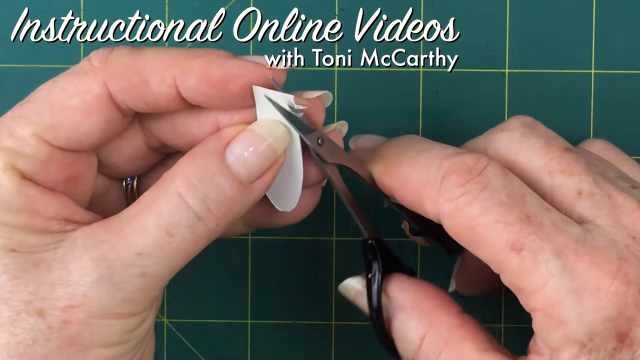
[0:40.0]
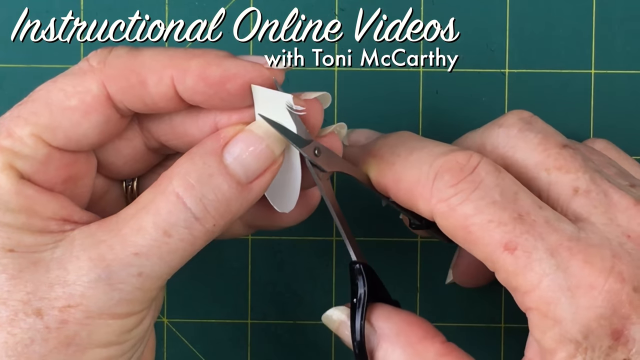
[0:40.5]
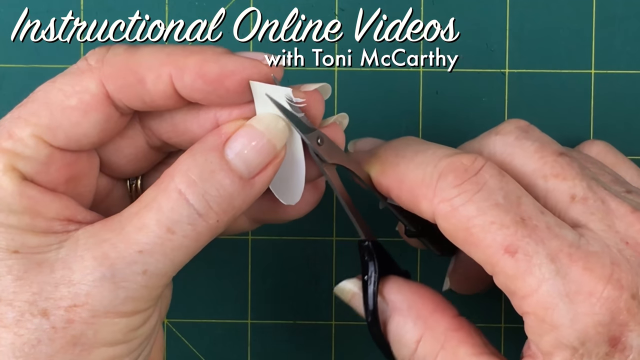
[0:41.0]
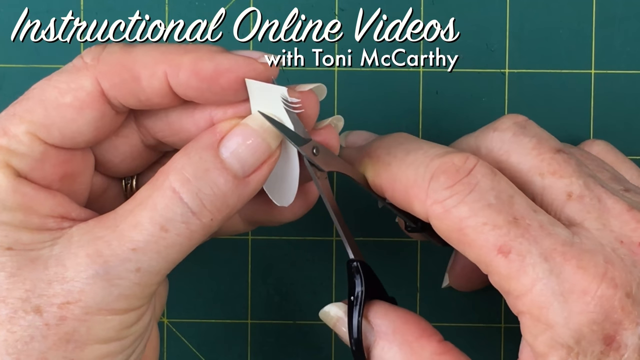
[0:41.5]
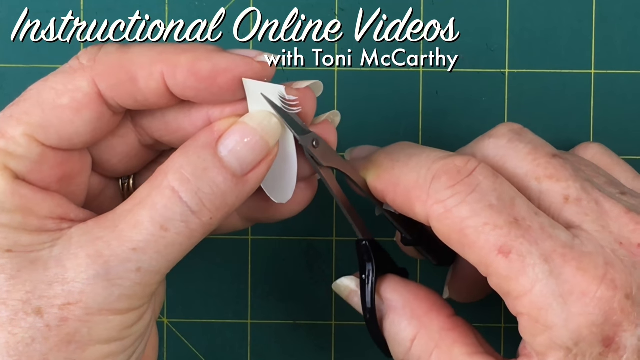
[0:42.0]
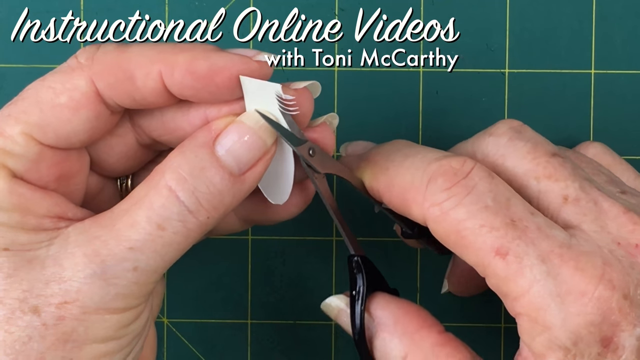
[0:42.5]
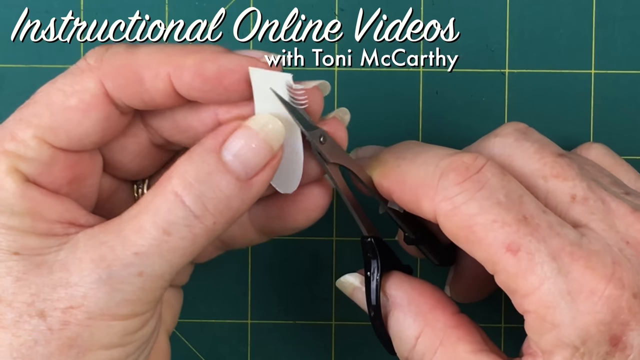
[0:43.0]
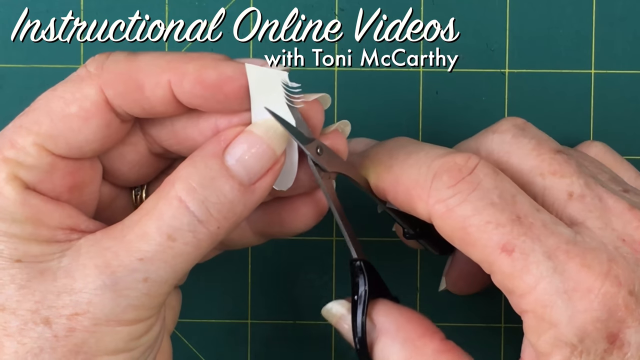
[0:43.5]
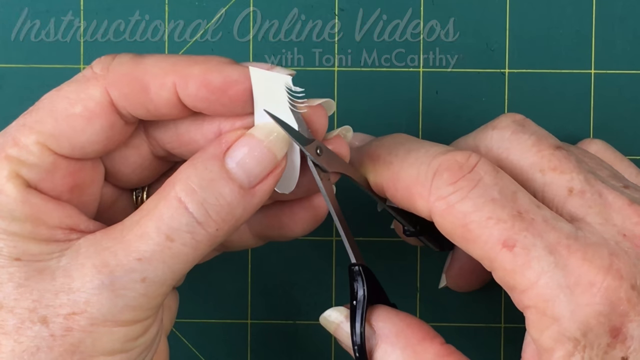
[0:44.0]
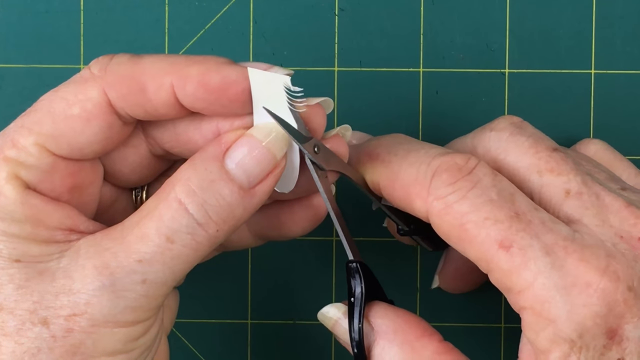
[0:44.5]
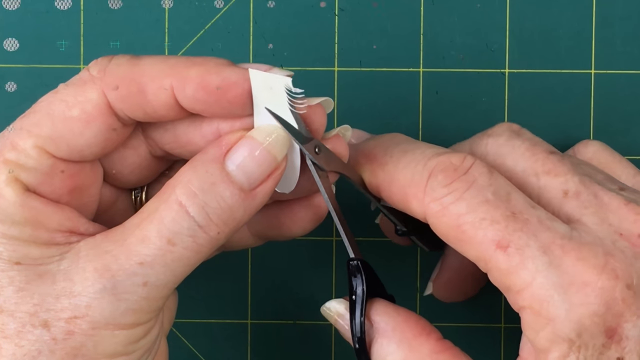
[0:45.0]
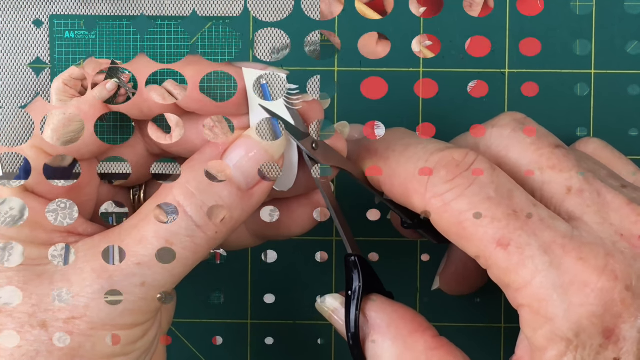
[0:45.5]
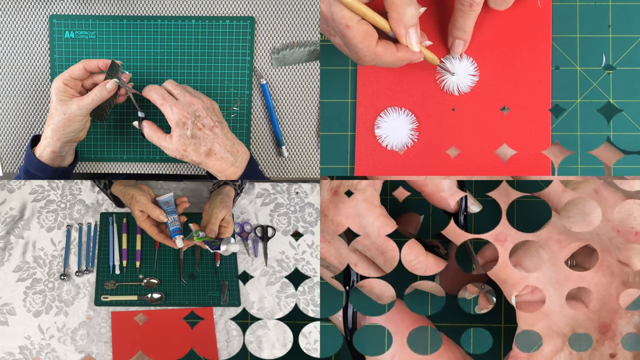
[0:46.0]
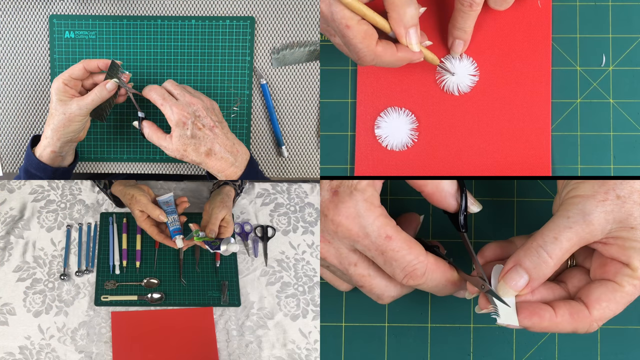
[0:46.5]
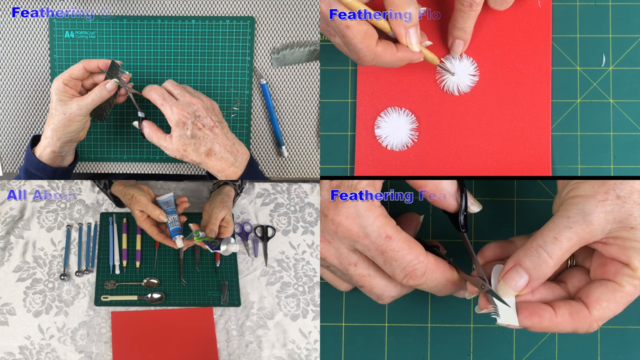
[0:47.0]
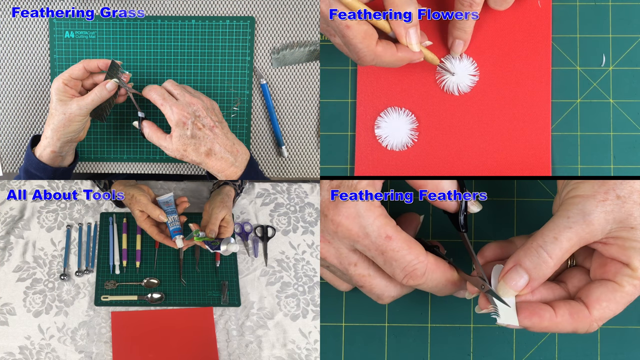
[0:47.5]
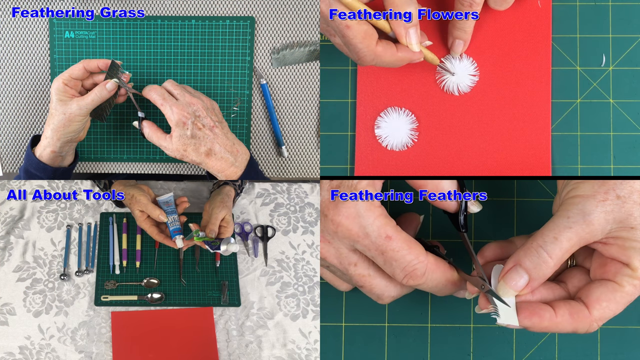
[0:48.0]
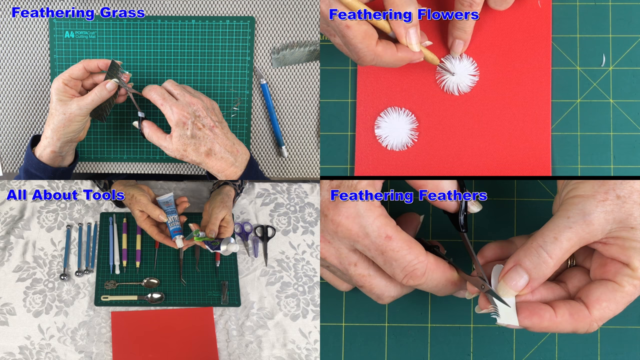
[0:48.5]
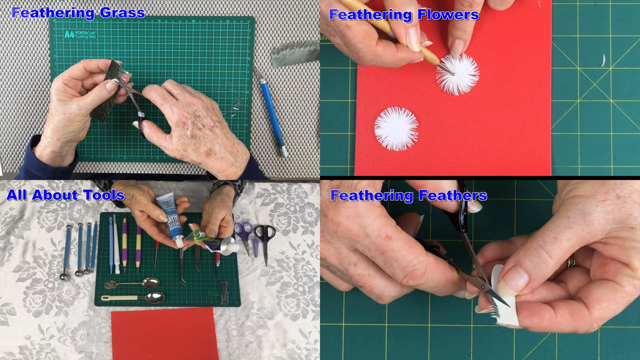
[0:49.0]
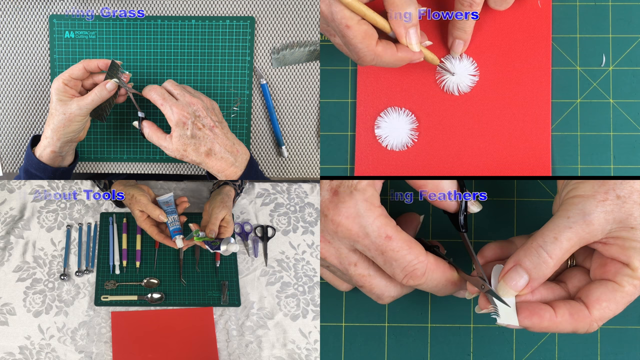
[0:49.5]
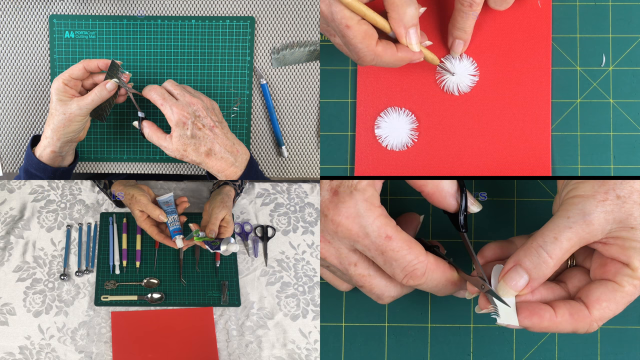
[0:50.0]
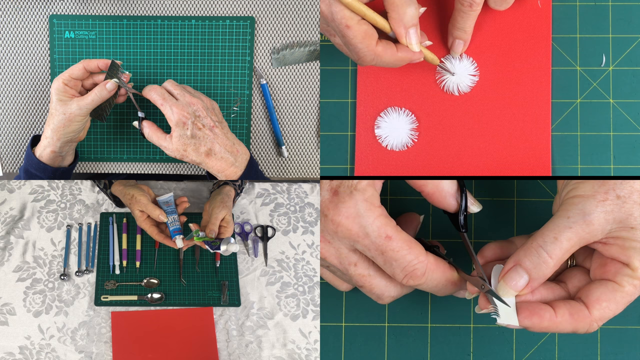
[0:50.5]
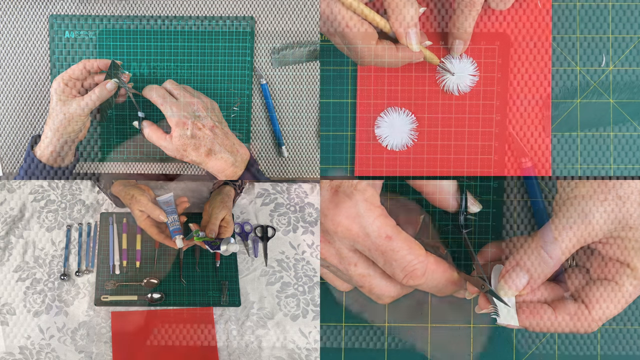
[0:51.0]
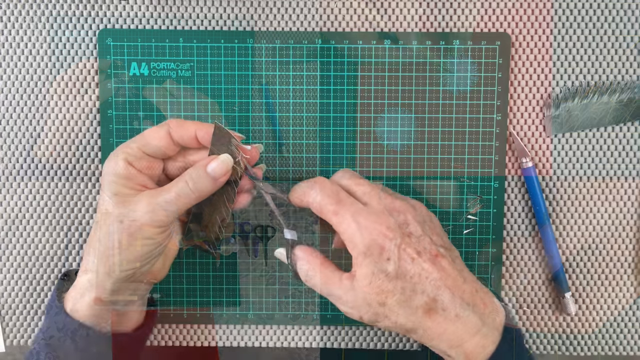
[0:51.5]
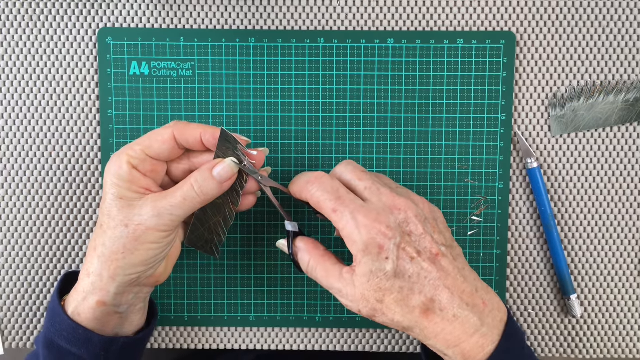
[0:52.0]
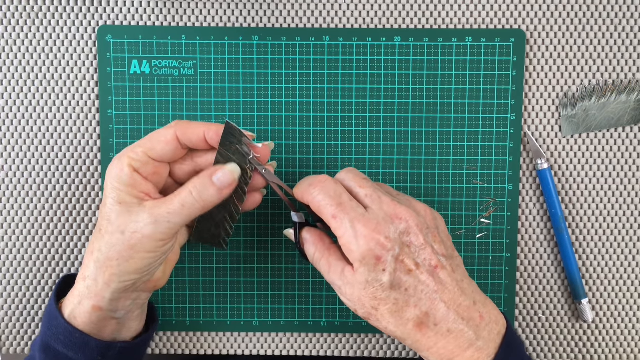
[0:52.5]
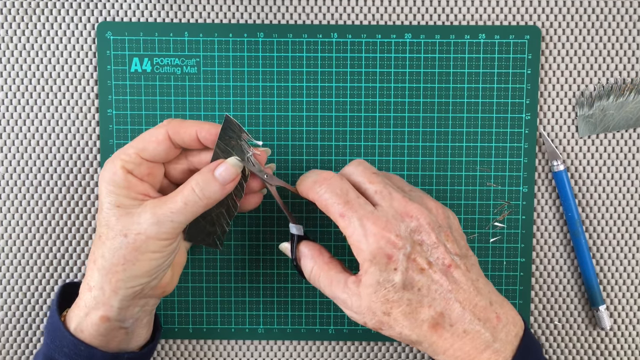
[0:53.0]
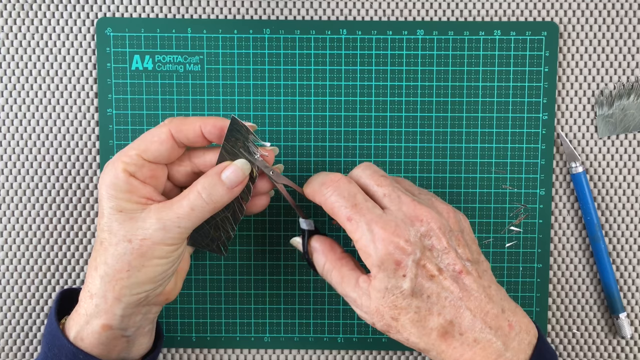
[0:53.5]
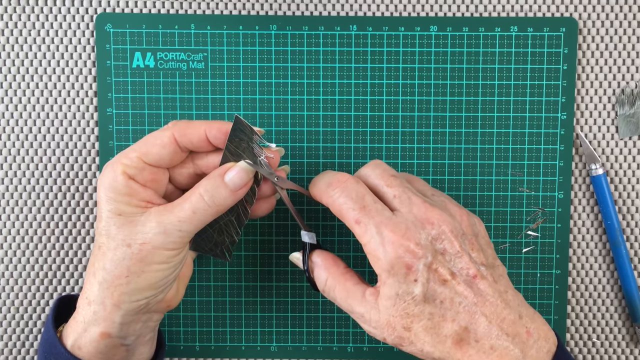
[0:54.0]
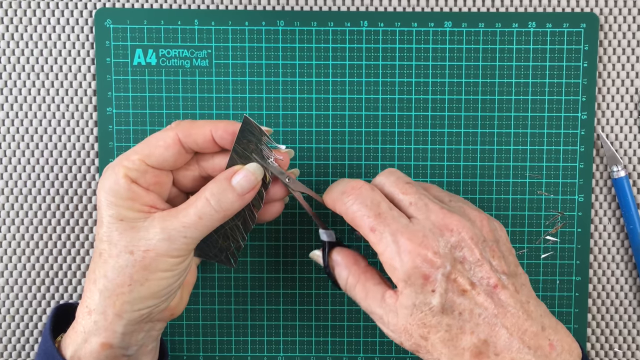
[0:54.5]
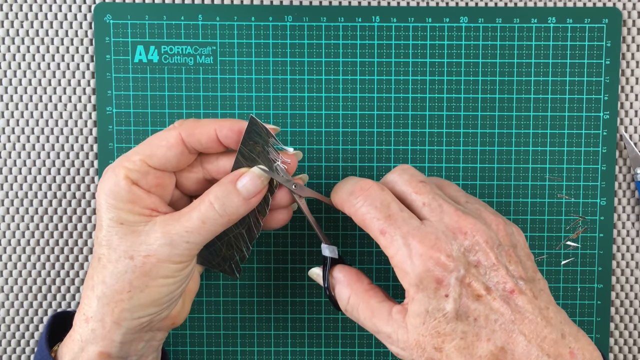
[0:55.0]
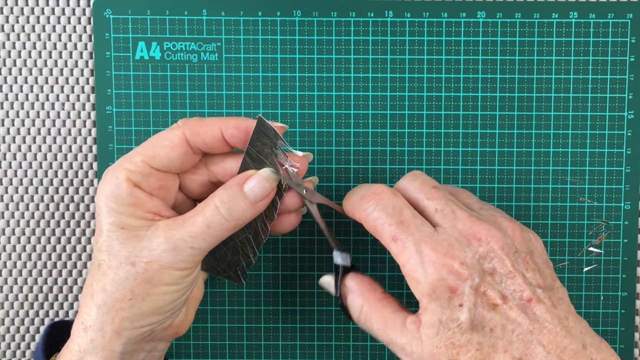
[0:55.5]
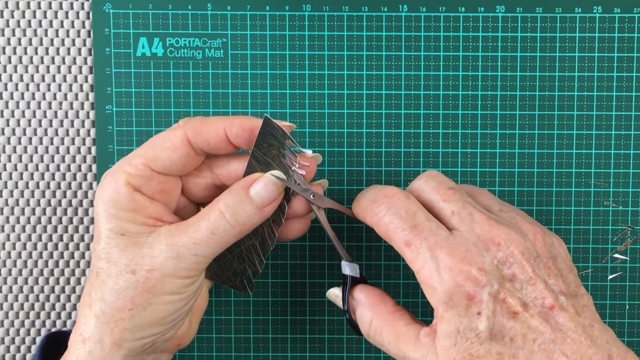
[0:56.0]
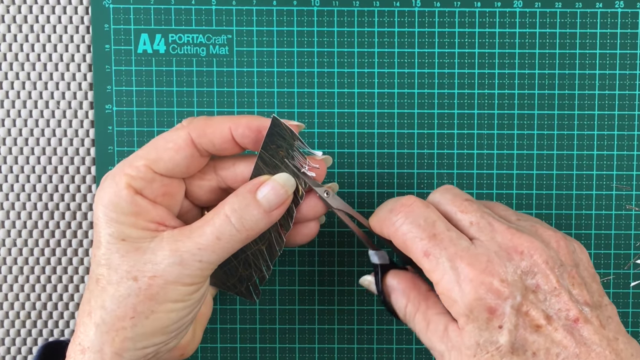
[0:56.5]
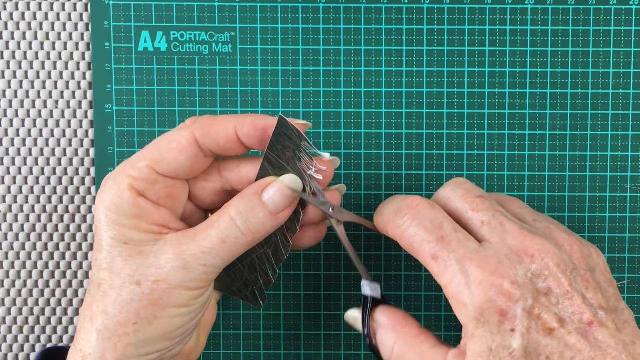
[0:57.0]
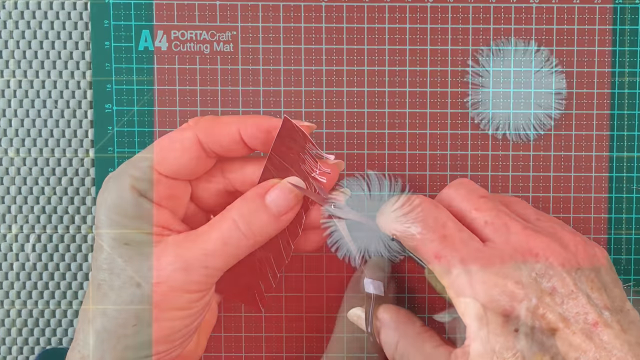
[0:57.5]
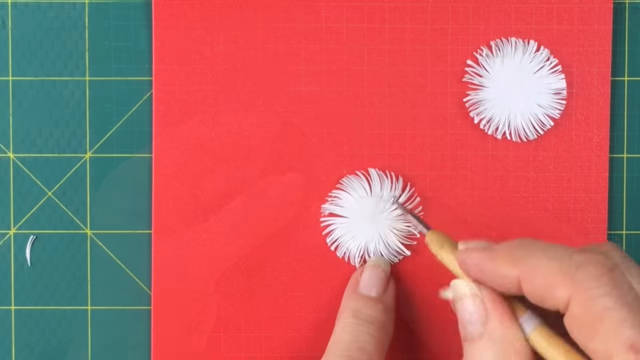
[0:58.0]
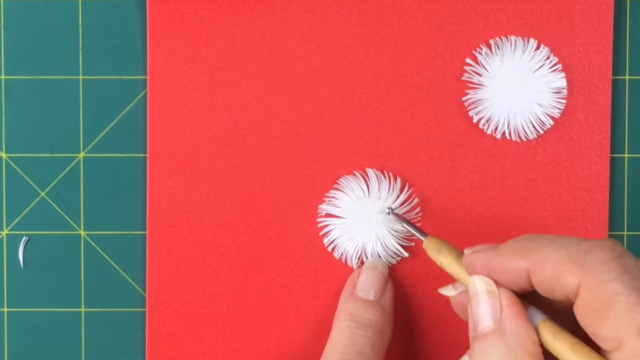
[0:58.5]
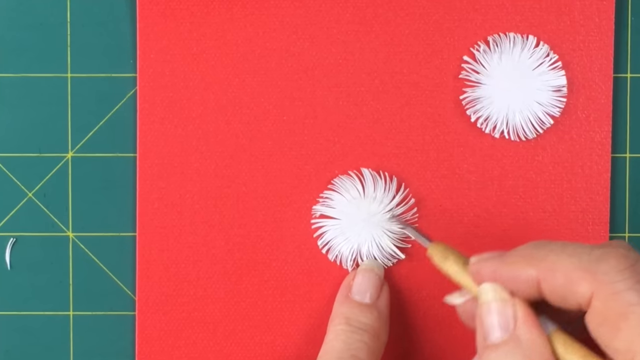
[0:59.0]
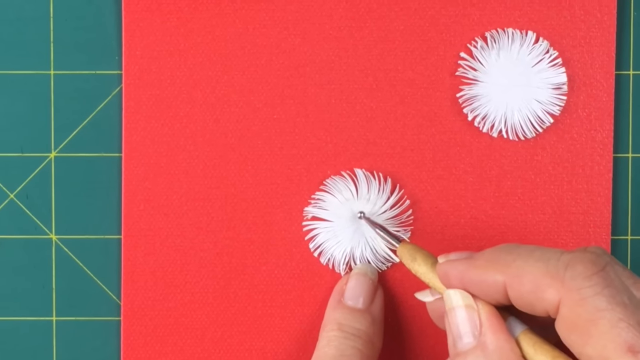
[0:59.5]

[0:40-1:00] A green checked mat, which is a cutting board, serves as the background. Two hands are shown zoomed in, holding a small oval-like paper with a flat bottom upside down, with small scissors in the right hand. The fingers have medium-length nails, apparently a woman's hand. The hand starts cutting the paper from the right side, like eyelashes, one by one, slowly. The screen then transitions and is divided into four quarters: the first has instructions on feathering grass, the second on feathering flowers, the third on tools, and the fourth on feathering feathers. The first quarter is zoomed in, and black paper is cut from top to bottom like eyelashes using the small scissors. Then the second part is shown: two circular feather-like patterns placed on a red paper, which is placed on the green cutting board. A dotting tool is used to arrange the feathers.